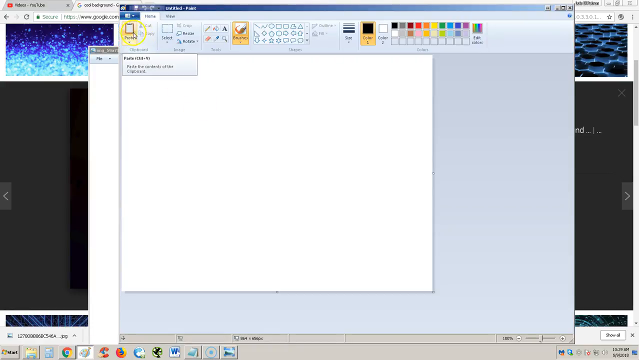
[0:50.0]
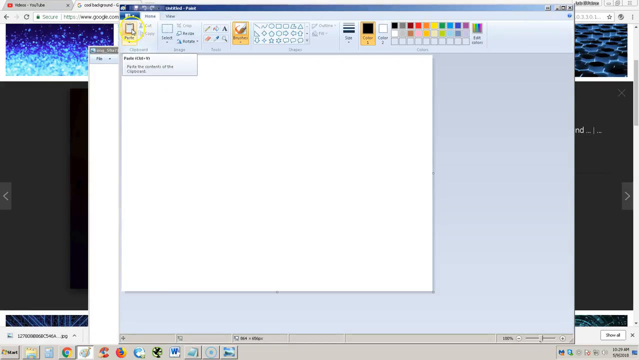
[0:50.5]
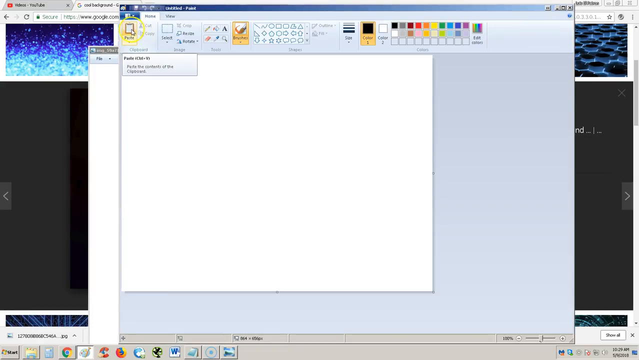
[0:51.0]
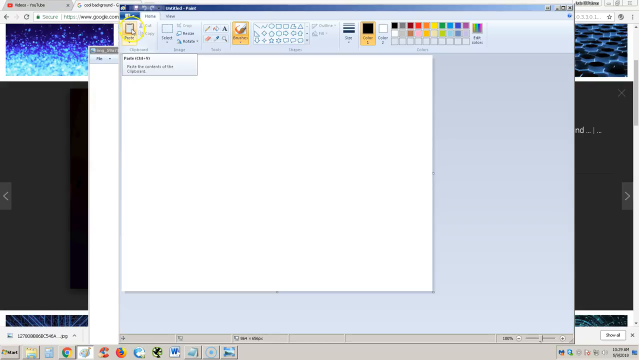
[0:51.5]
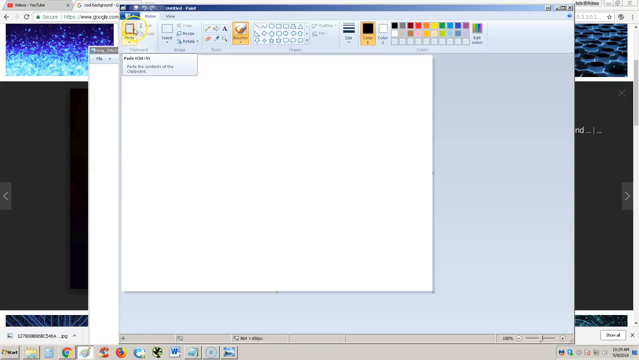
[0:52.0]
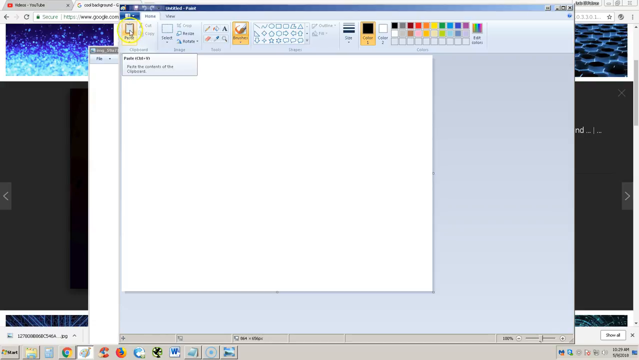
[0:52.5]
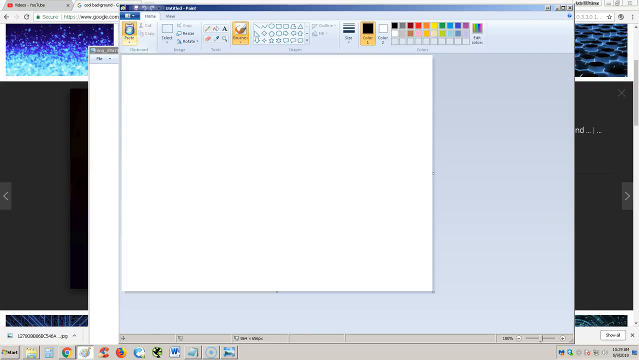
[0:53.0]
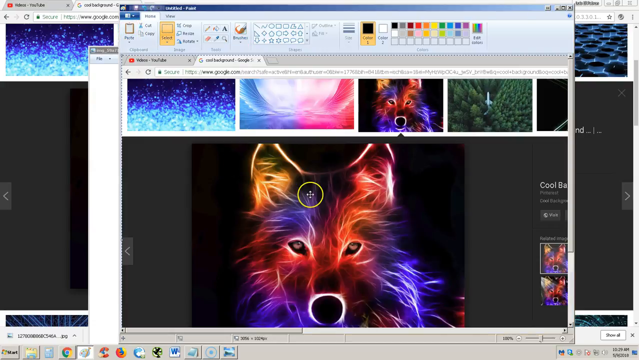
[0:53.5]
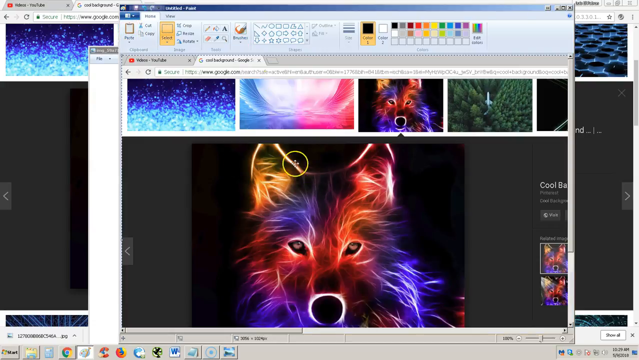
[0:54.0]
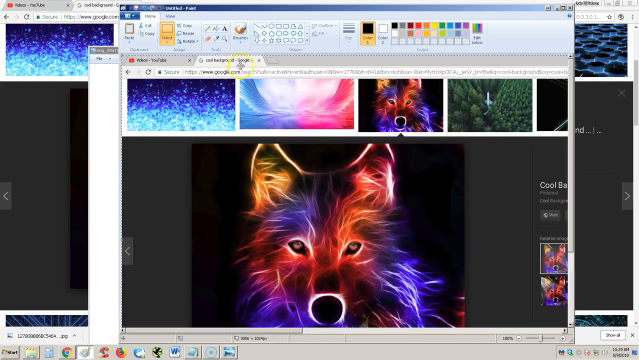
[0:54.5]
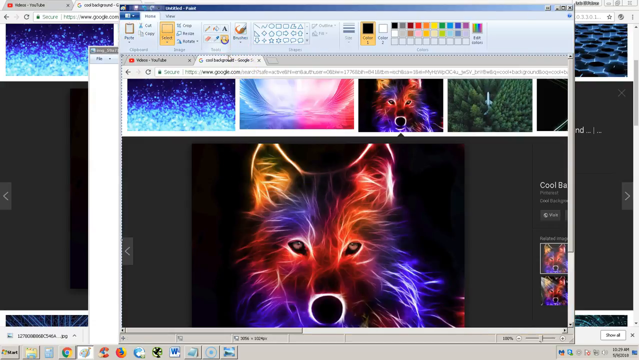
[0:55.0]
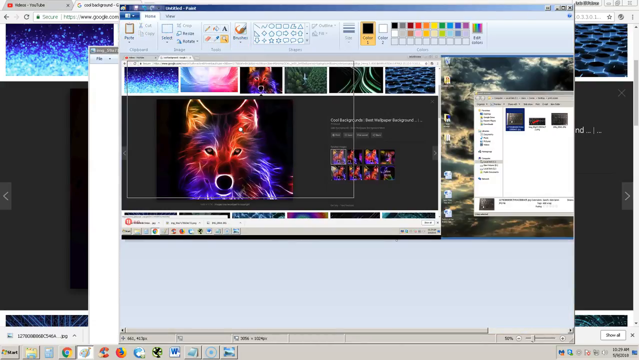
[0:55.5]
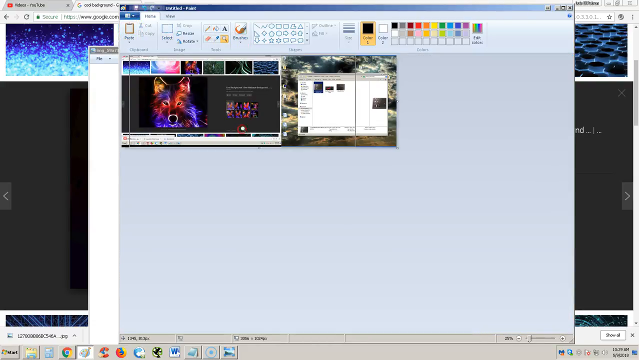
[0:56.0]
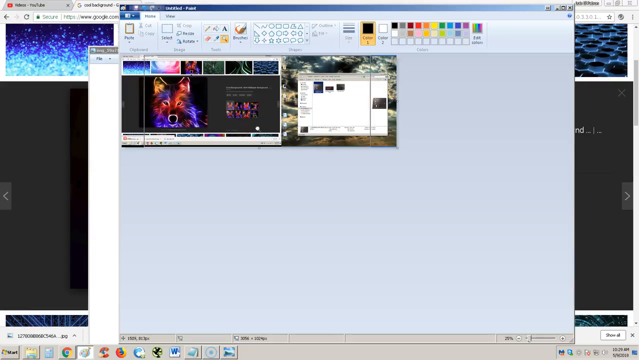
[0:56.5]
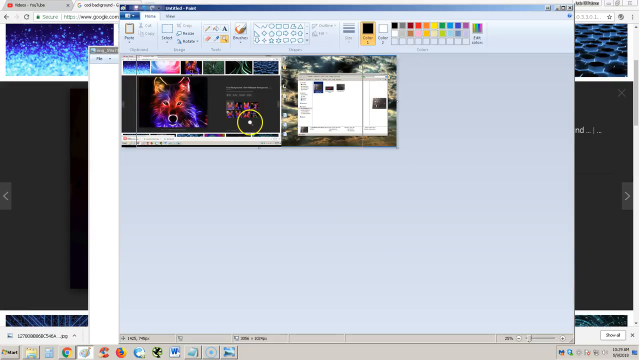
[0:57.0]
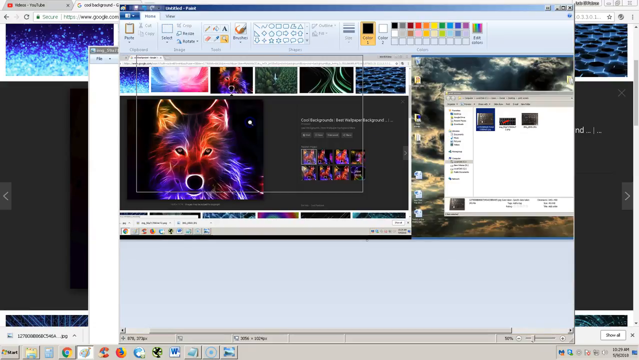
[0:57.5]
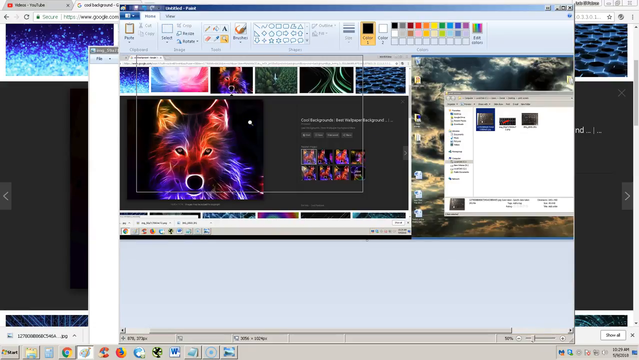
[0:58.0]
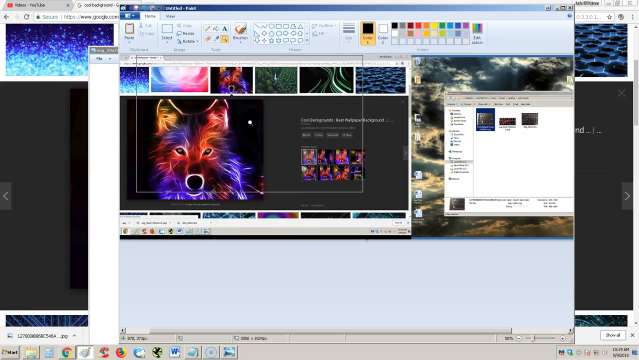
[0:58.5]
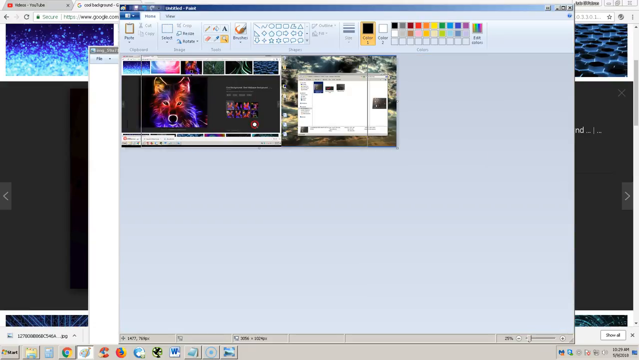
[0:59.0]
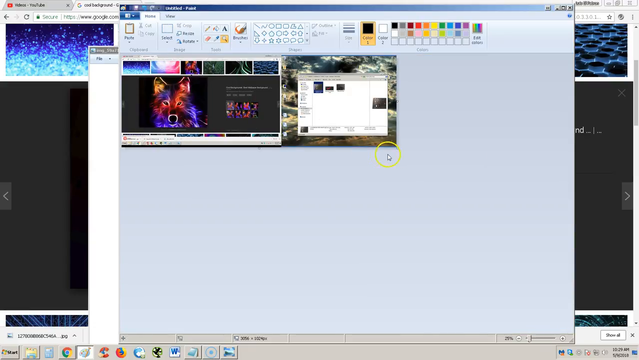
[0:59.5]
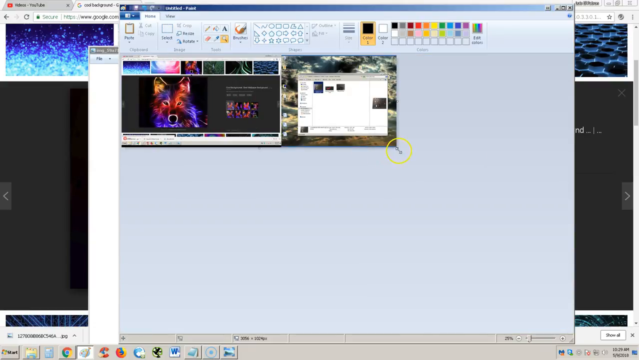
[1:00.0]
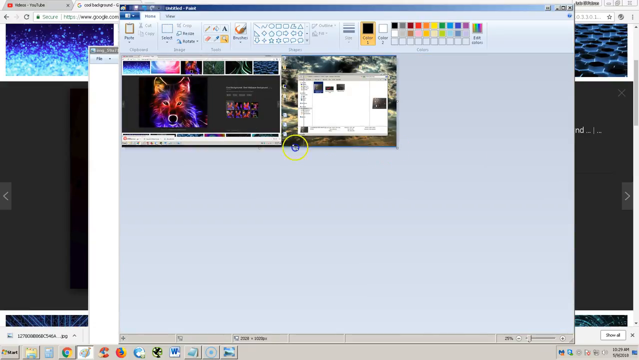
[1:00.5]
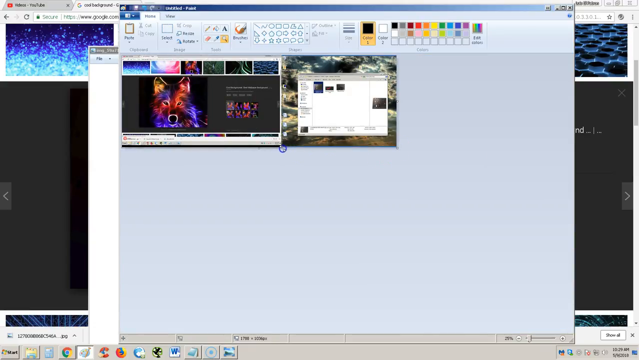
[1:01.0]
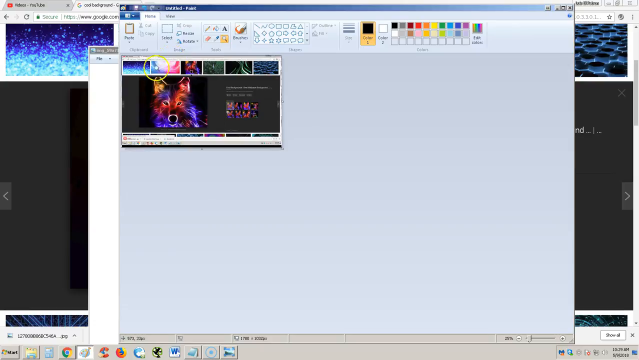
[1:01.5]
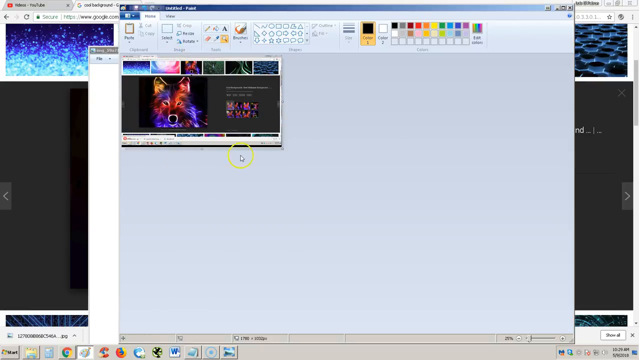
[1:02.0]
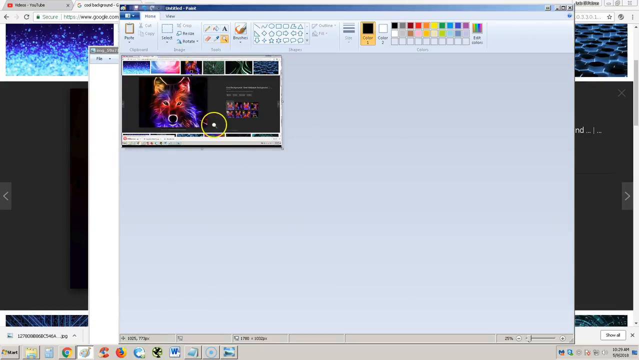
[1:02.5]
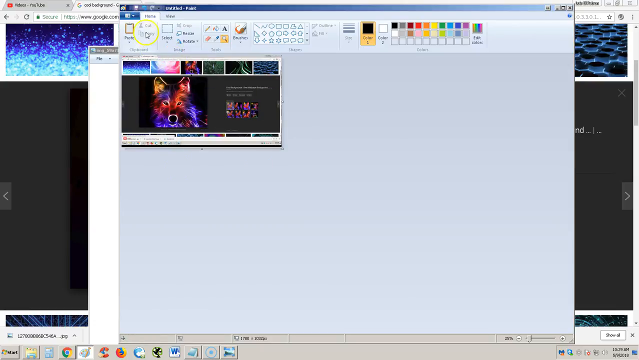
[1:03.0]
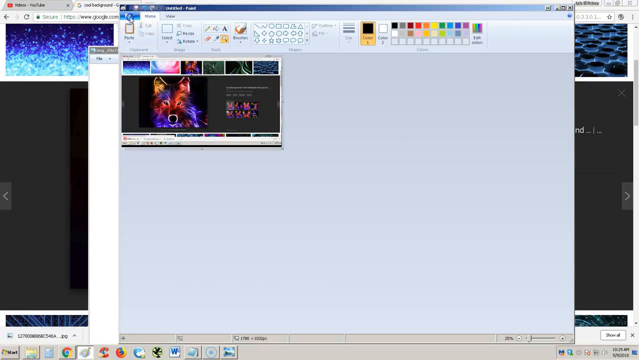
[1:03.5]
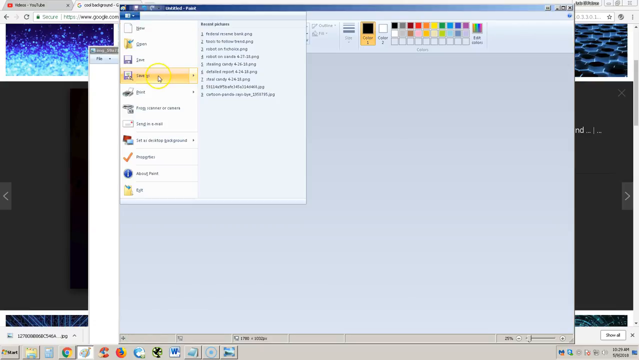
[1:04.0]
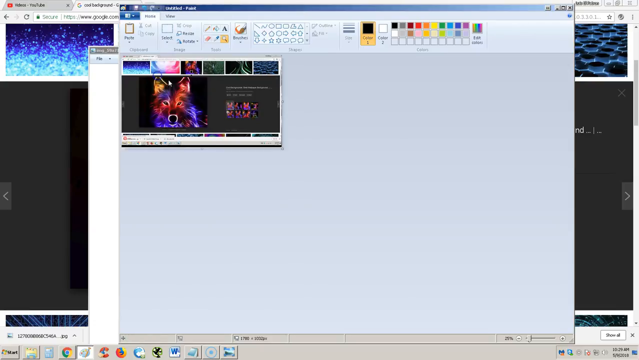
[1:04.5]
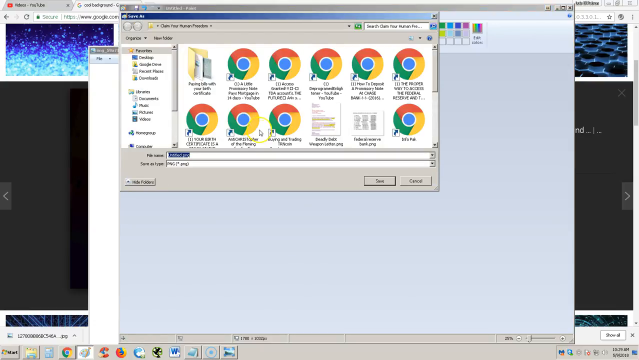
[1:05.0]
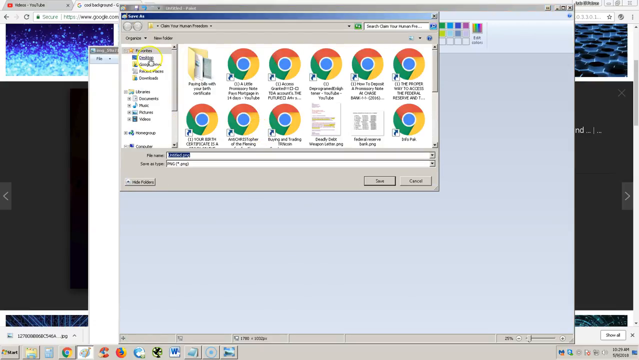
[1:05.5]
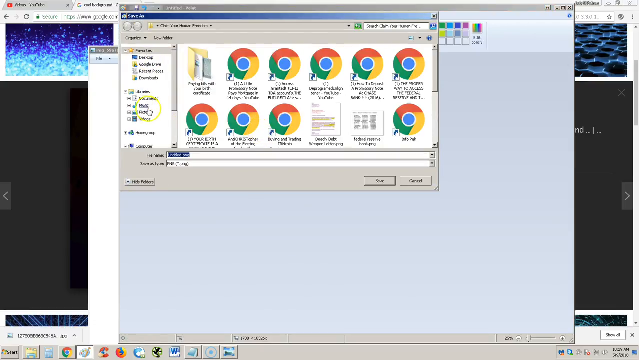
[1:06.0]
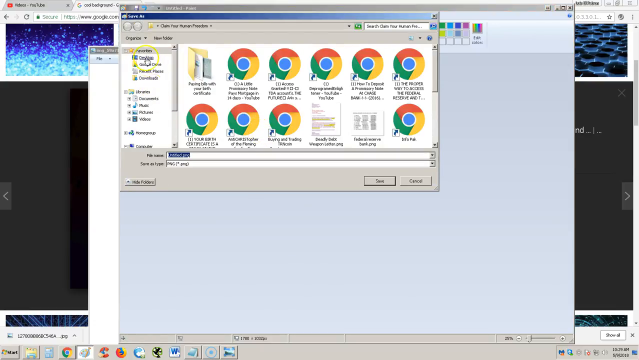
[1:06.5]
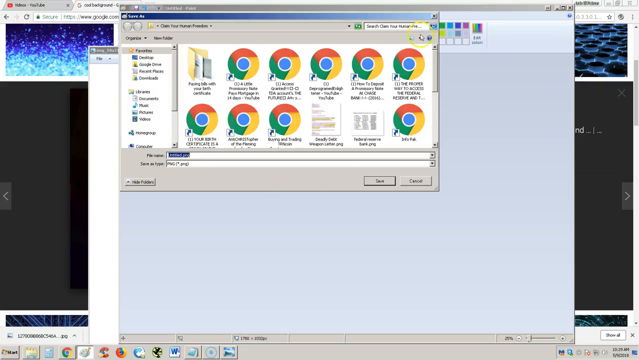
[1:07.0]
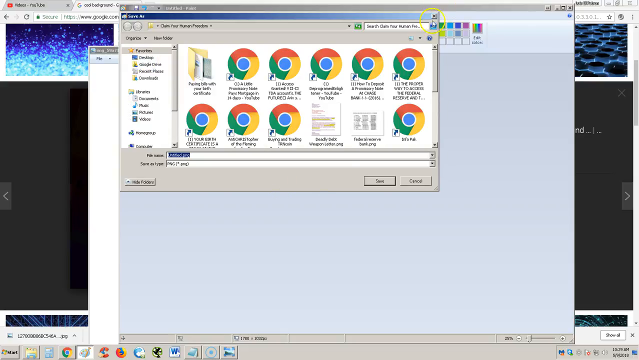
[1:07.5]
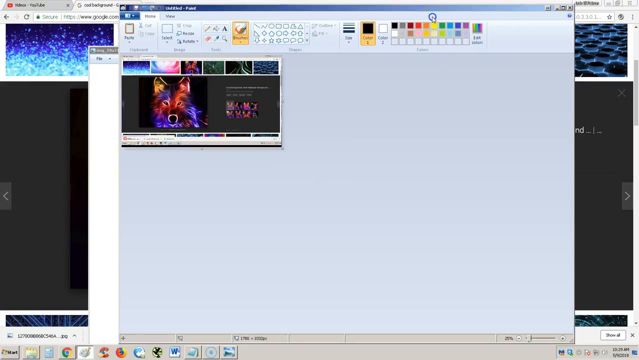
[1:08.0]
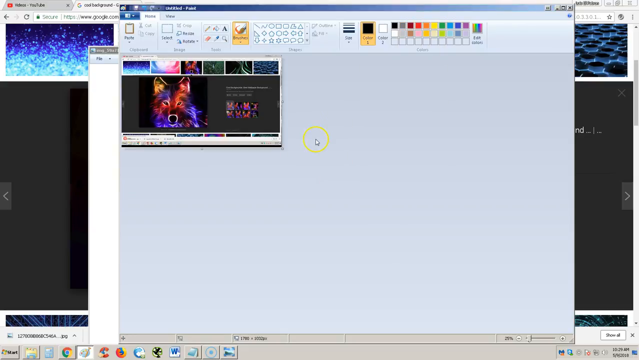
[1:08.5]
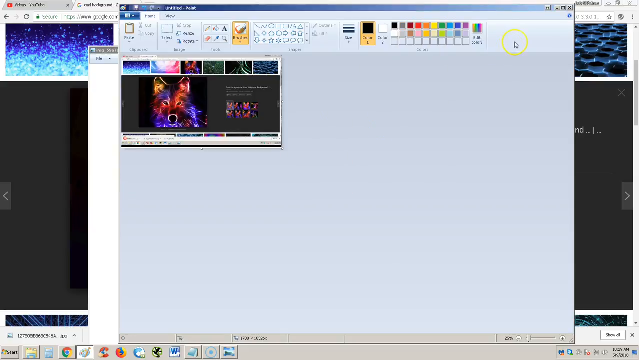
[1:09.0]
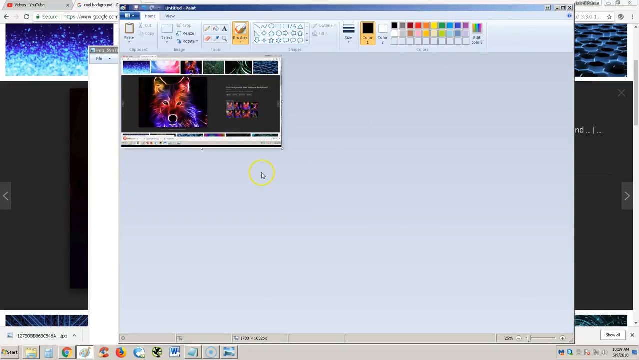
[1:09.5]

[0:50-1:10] The option is highlighted in yellow and says "paste", with a clipboard icon. The cursor circles and hovers over it, then clicks it, and the screenshot of the page with the wolf and cool backgrounds appears, with all the tabs at the top. The cursor clicks the magnifying glass icon, and the wolf image shrinks so it can be seen in its entirety, with another image to its right. A gray square moves around, the wolf image enlarges a little, the gray rectangle is brought up again, and the view returns to the smaller size. The image on the right side of the wolf looks like a calendar against a sky. In the bottom right corner there are two arrows; she clicks on those, then clicks the bottom left one, and it disappears. She puts a magnifying glass on the wolf image below and runs the cursor in a circle over the entire image. She then points to the upper left corner at the very top, above Paste, and clicks what seems to be the File tab. Some options open and she clicks Save As. A Save As window pops up showing many Google Chrome shortcuts. She scrolls in circles around the favorites and then closes the window.